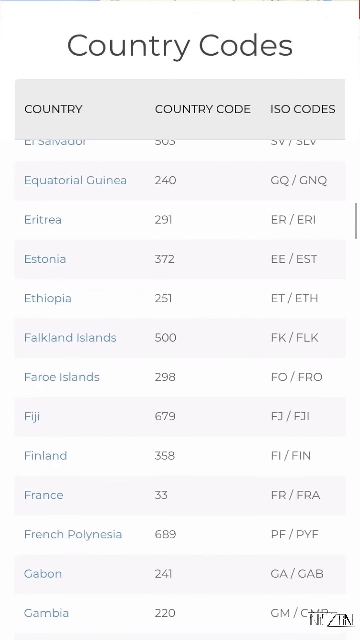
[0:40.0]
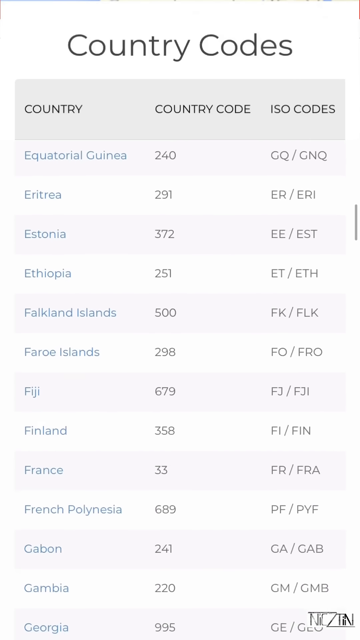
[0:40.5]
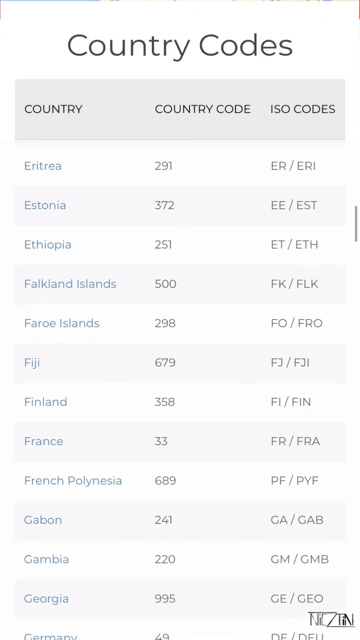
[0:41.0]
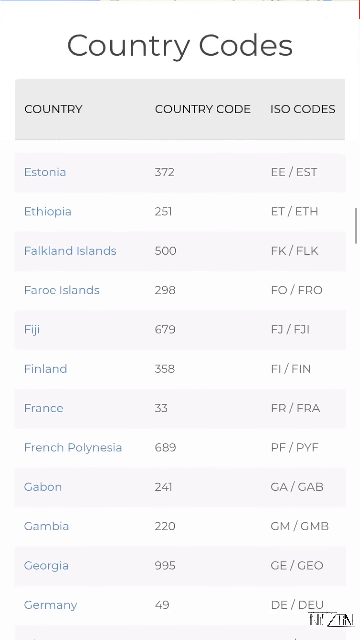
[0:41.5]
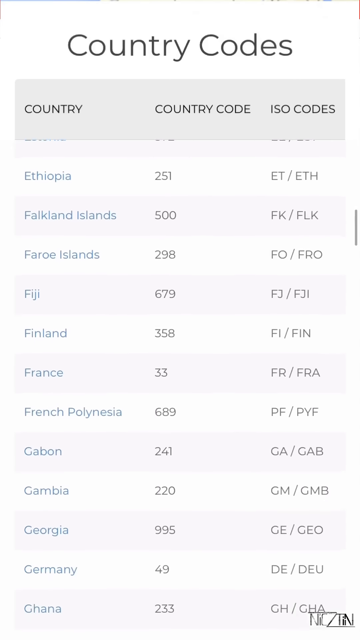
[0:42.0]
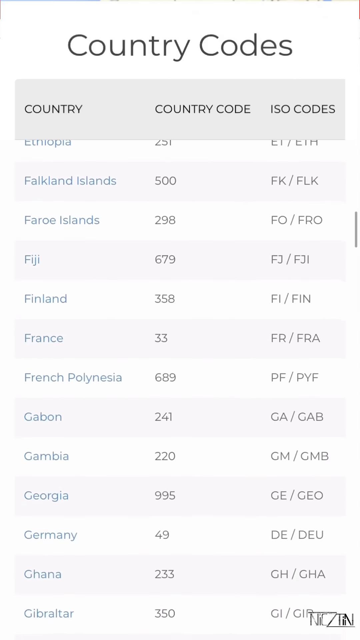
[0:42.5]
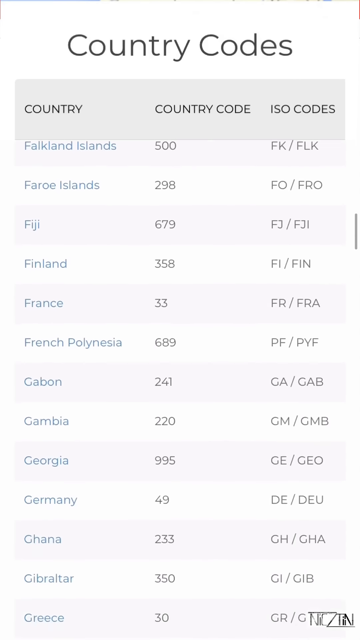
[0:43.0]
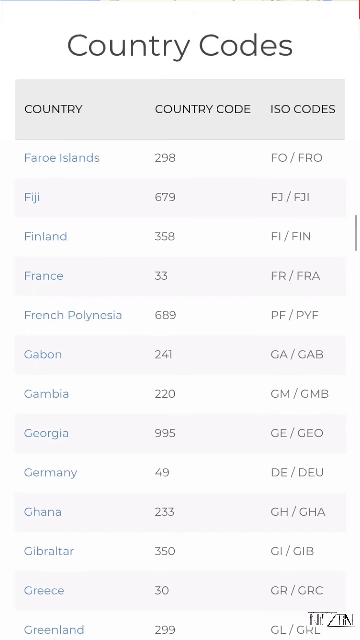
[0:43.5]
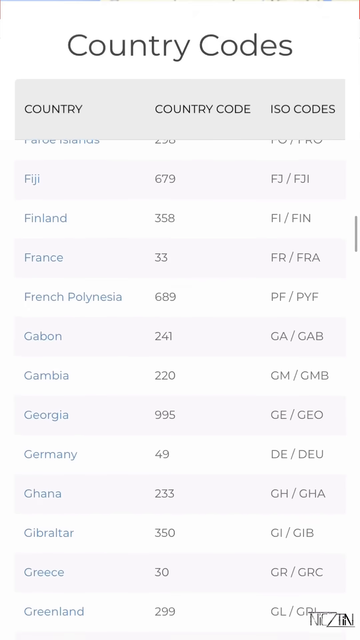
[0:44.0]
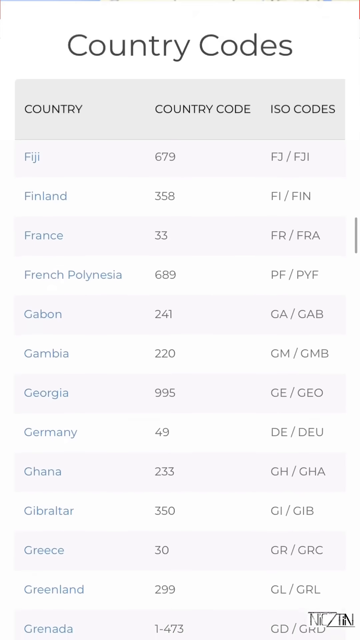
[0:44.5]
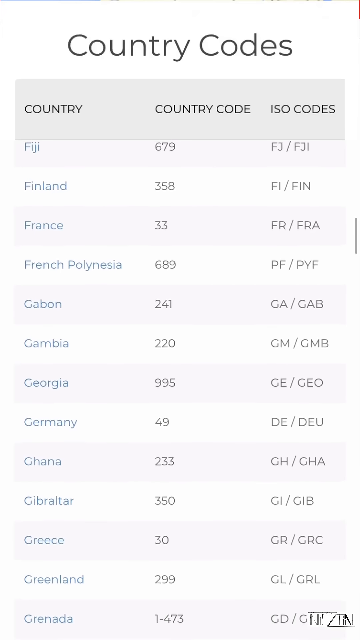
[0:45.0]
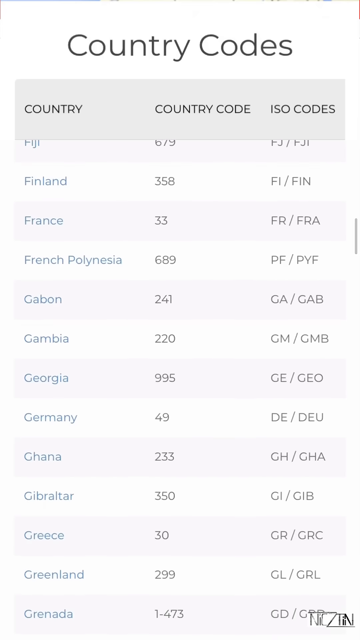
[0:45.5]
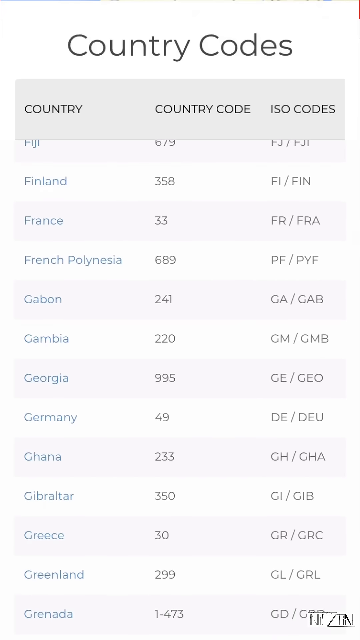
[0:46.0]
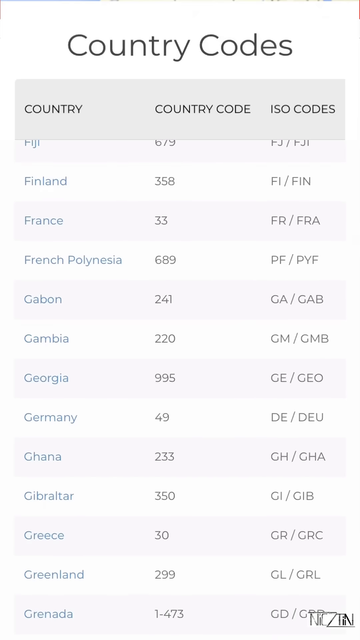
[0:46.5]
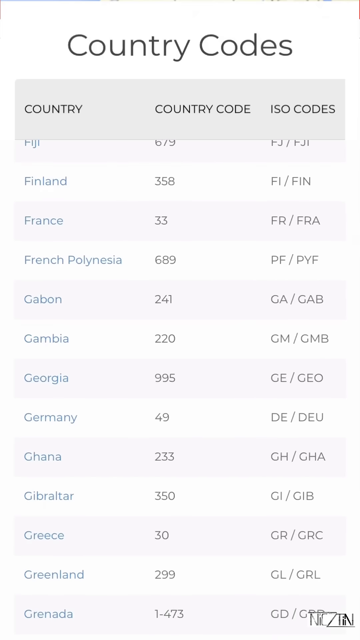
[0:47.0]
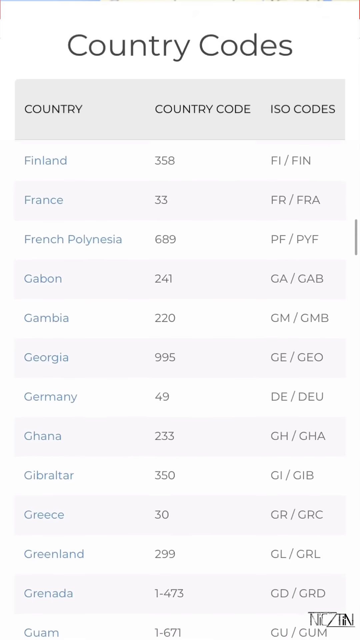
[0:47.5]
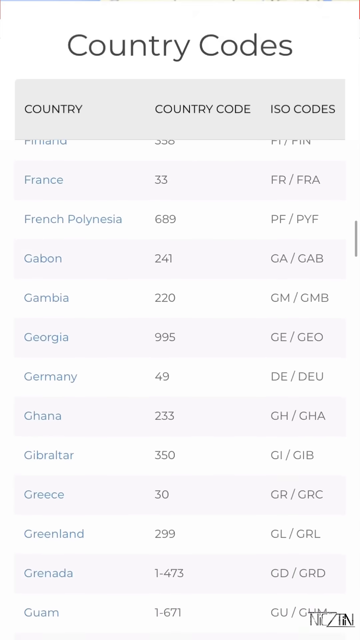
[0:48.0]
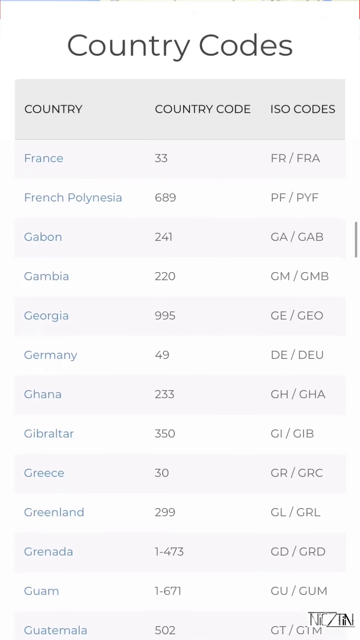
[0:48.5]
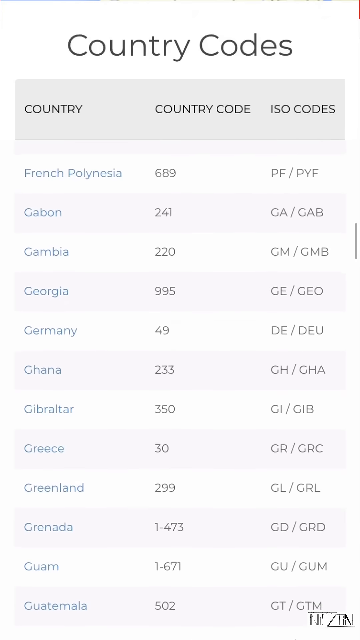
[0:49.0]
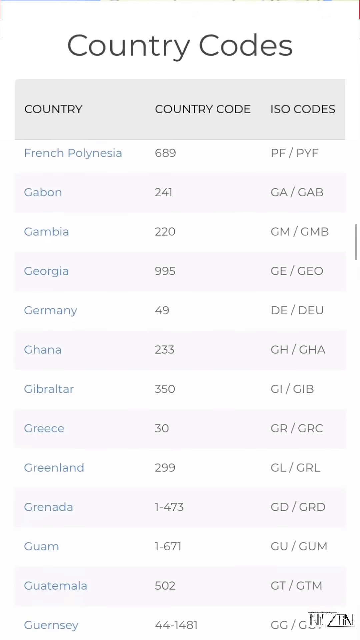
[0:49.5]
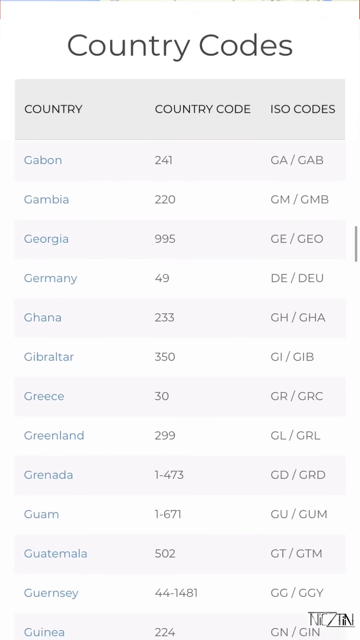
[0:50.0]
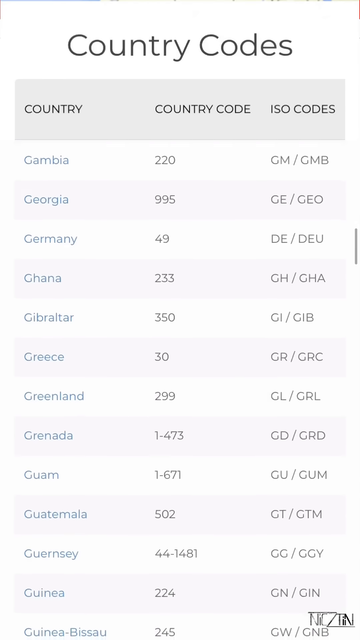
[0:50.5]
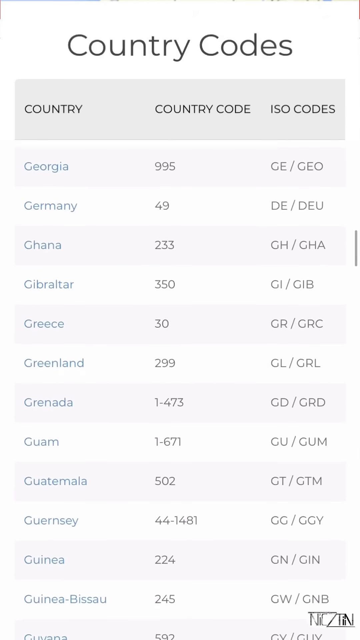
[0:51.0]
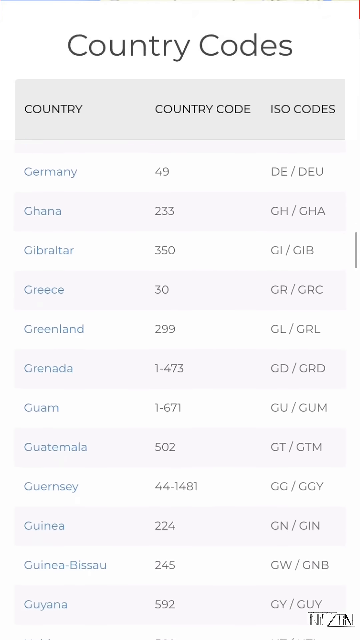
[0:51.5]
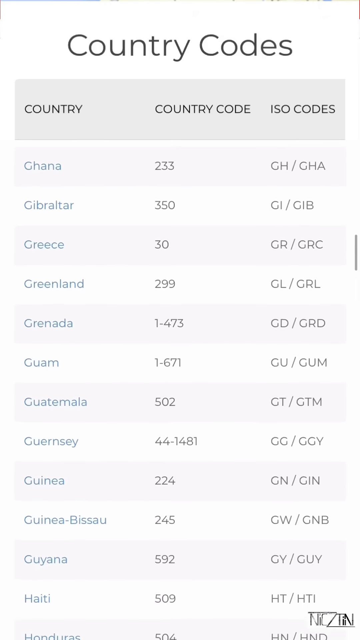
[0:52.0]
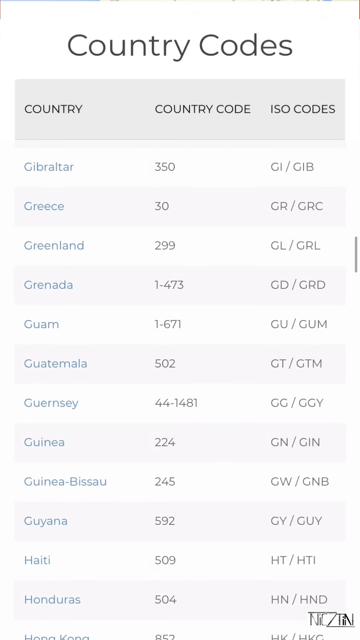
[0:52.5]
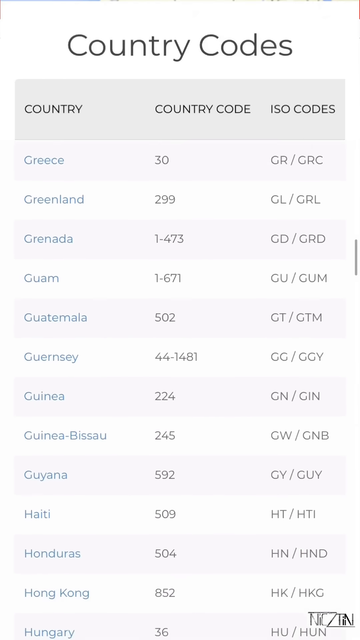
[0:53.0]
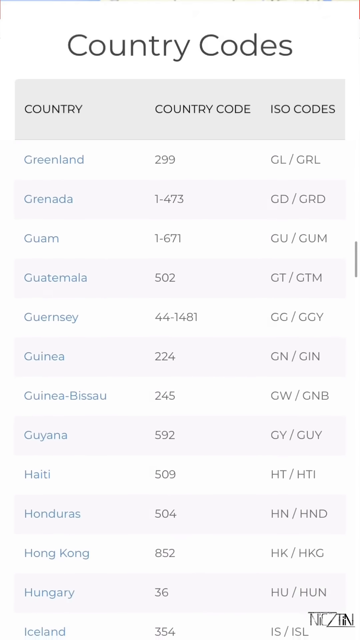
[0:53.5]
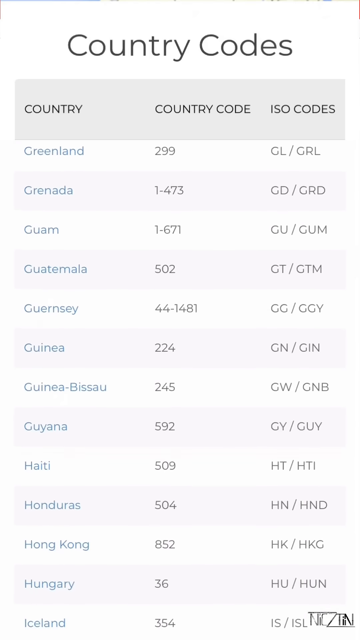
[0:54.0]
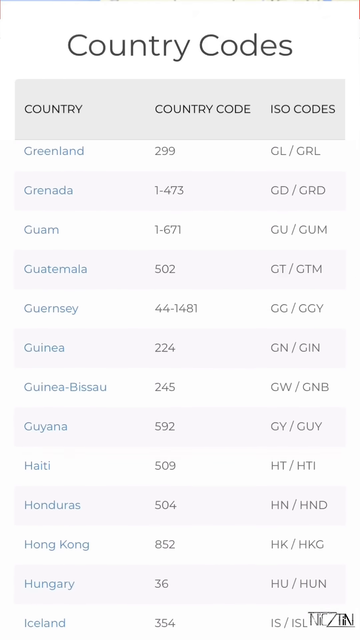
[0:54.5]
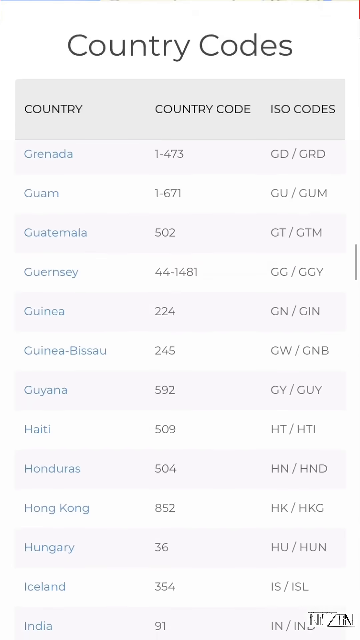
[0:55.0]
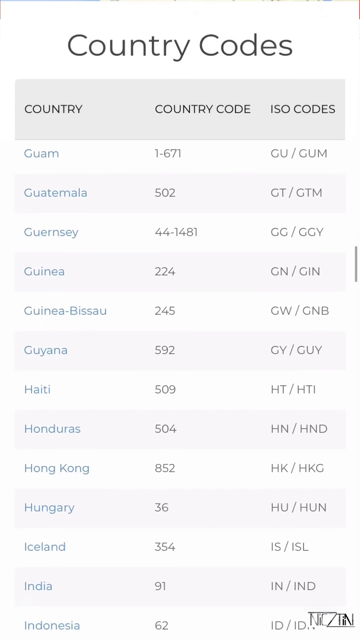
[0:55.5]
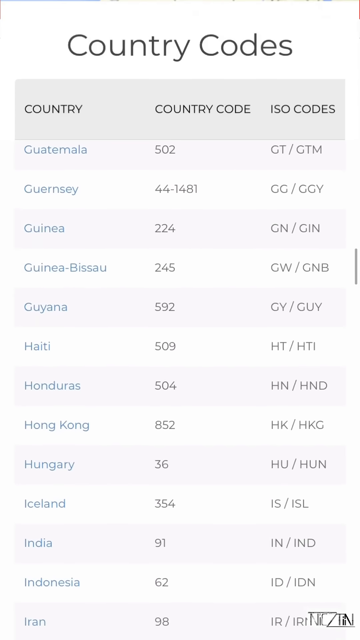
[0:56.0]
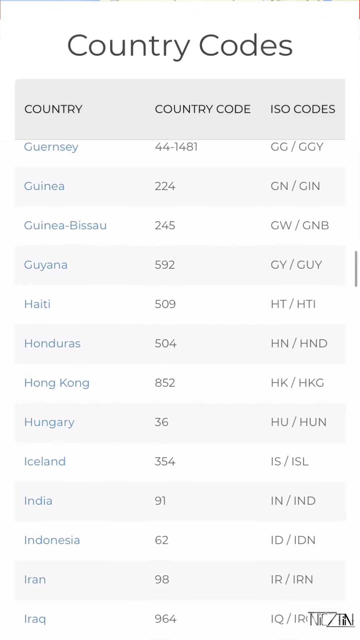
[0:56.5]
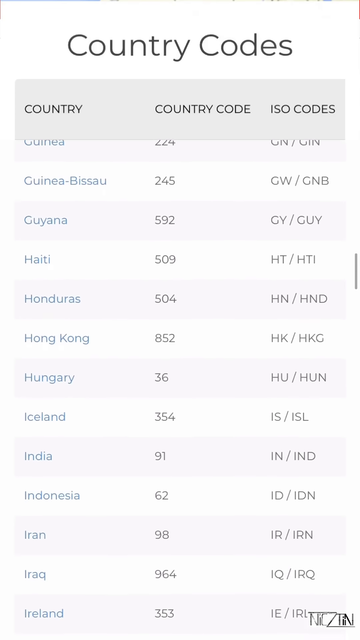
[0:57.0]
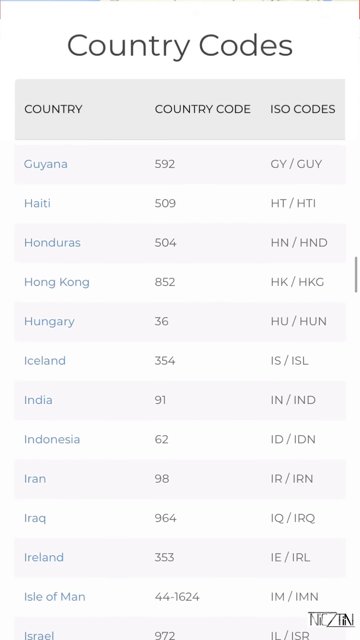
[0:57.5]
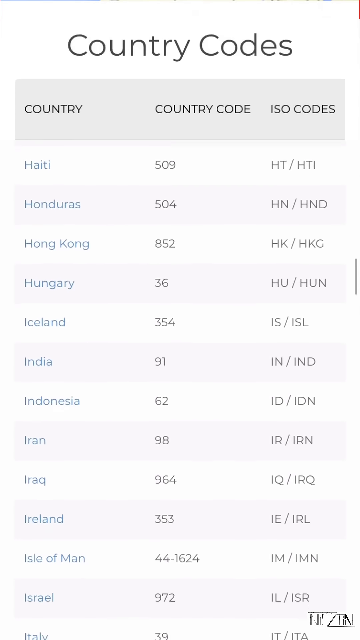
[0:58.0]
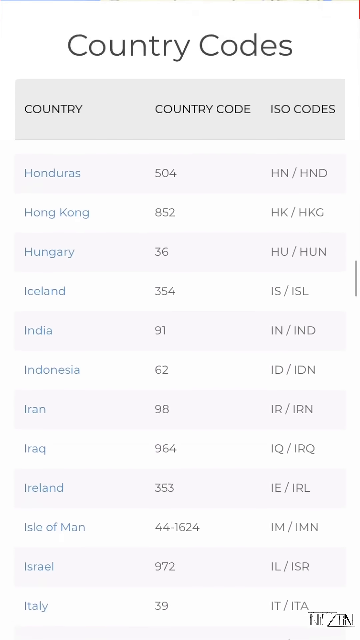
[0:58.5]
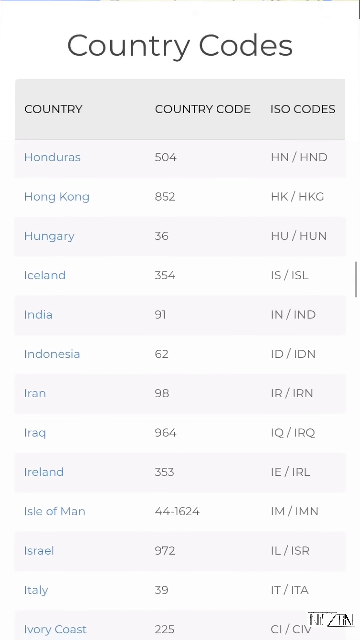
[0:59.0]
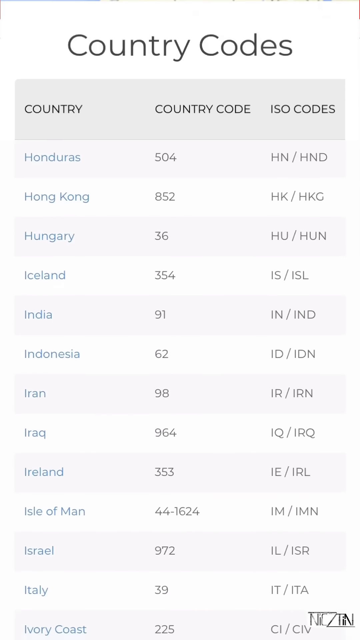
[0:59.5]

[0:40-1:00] "Country codes" appears at the top, with the headings "country," "country code," and "ISO codes." The list starts in the E's with Equatorial Guinea, followed by Eritrea, Estonia, and Ethiopia, then scrolls through the F's and into the G's, including Gabon and Guernsey, pausing and continuing down through the H's and I's.